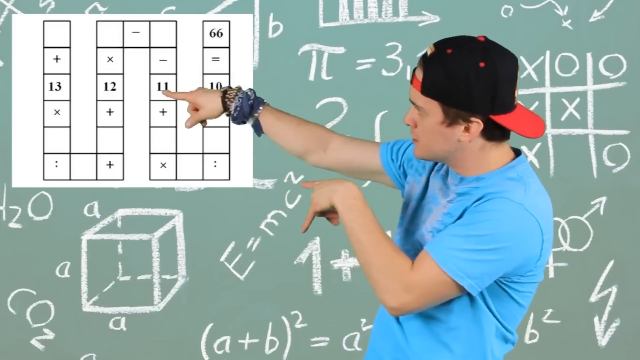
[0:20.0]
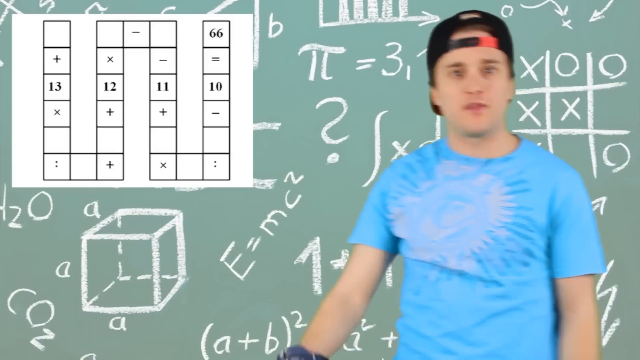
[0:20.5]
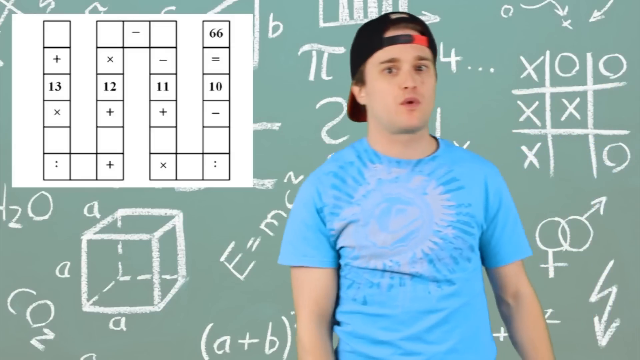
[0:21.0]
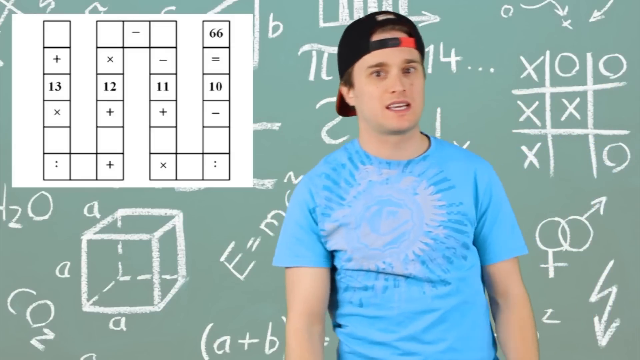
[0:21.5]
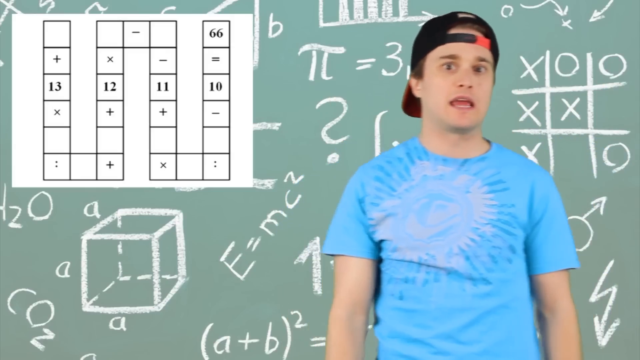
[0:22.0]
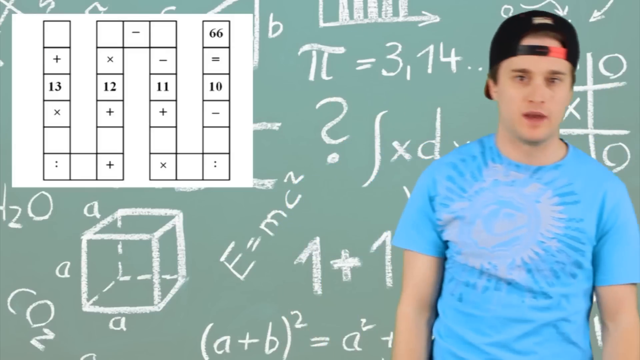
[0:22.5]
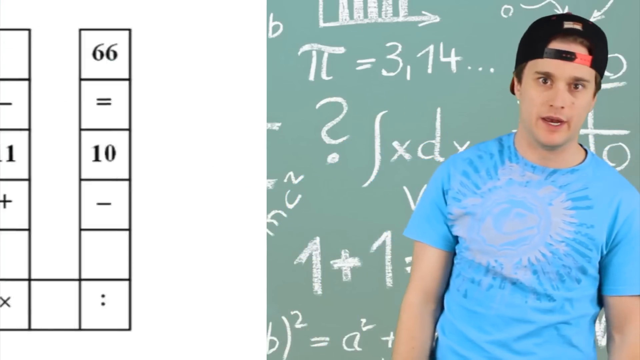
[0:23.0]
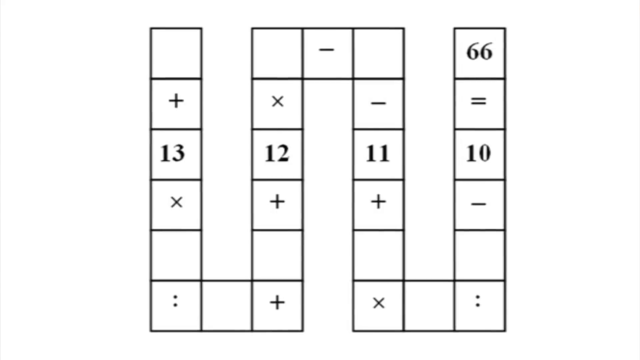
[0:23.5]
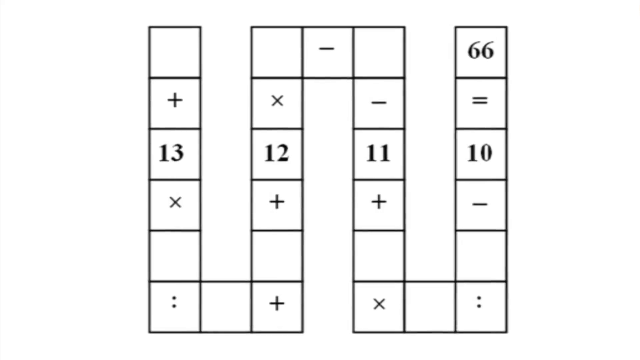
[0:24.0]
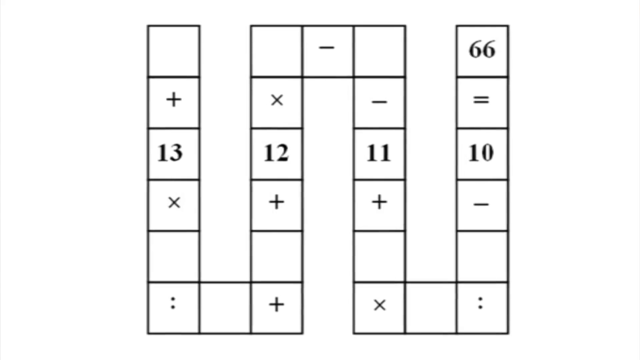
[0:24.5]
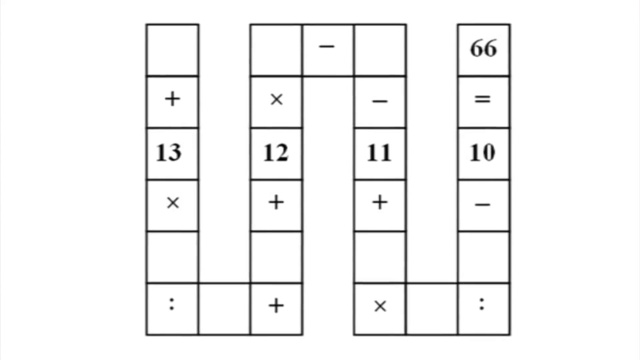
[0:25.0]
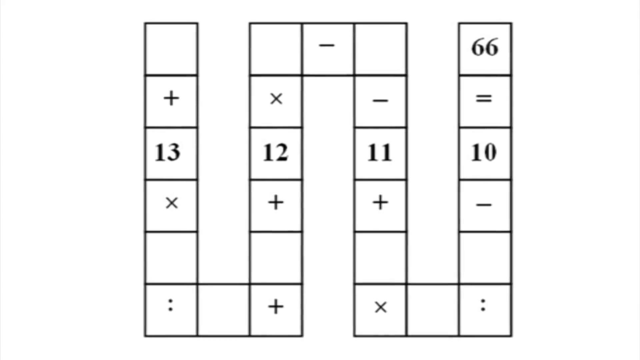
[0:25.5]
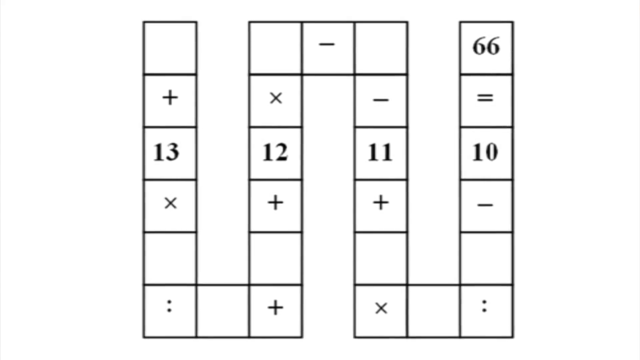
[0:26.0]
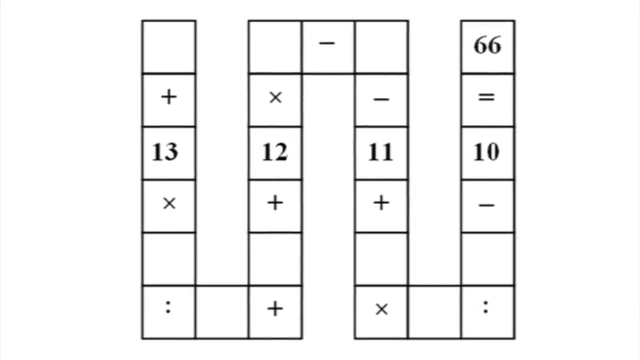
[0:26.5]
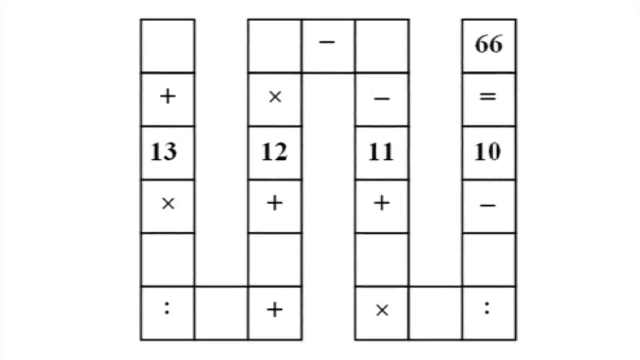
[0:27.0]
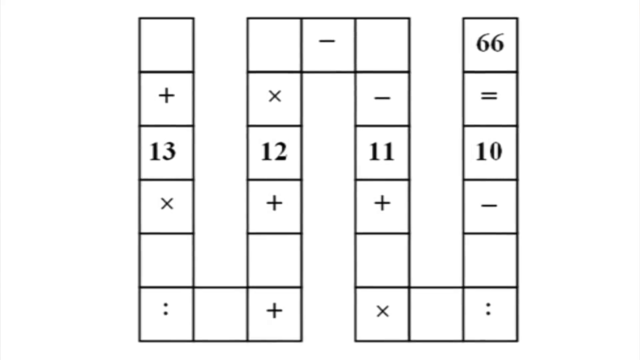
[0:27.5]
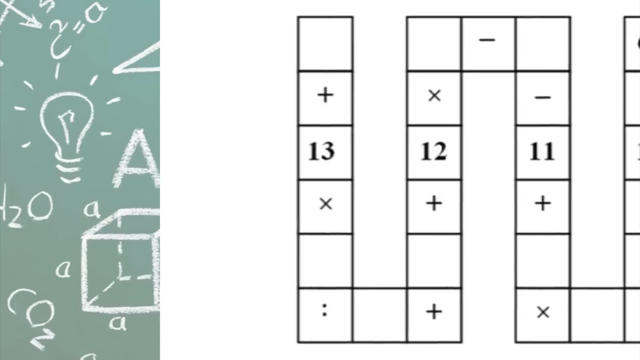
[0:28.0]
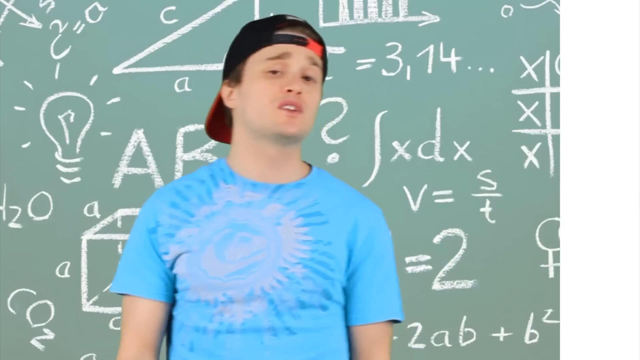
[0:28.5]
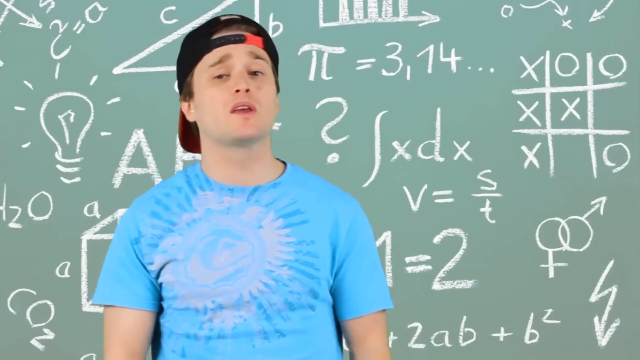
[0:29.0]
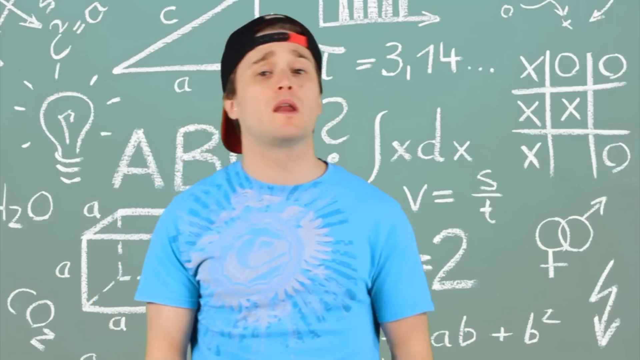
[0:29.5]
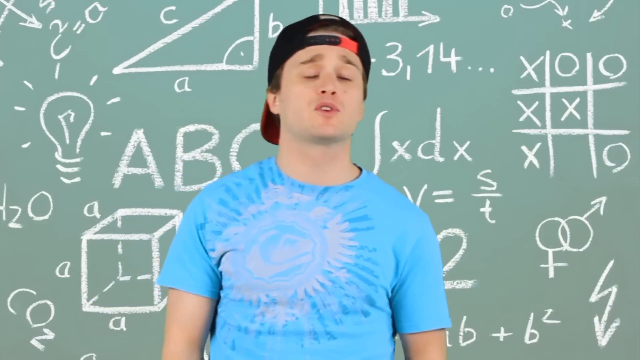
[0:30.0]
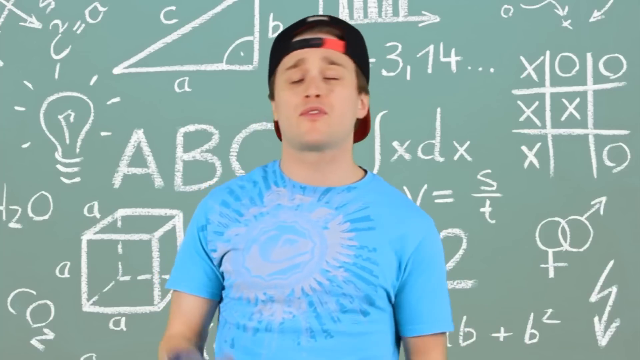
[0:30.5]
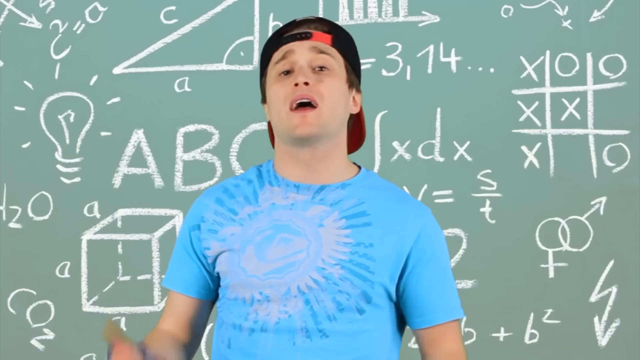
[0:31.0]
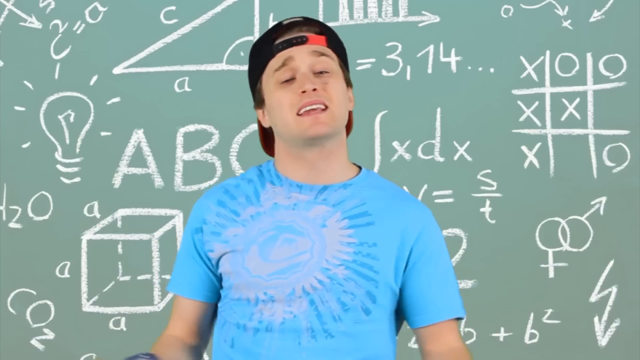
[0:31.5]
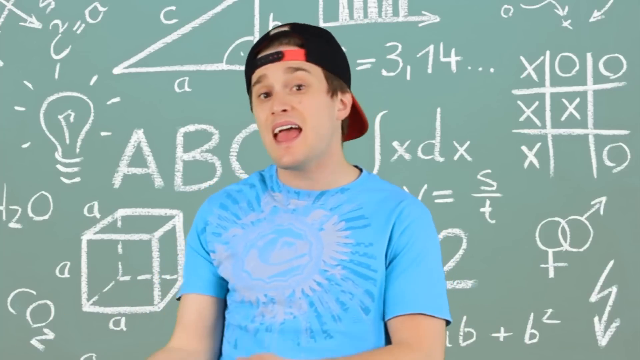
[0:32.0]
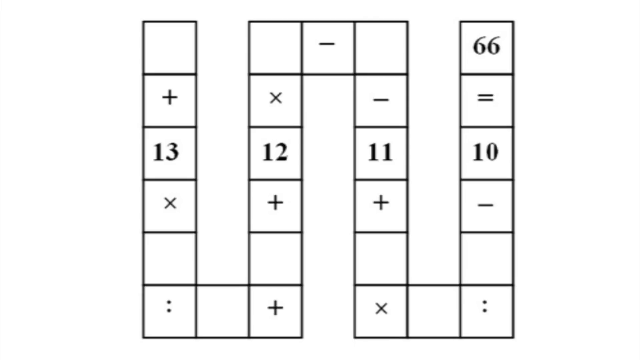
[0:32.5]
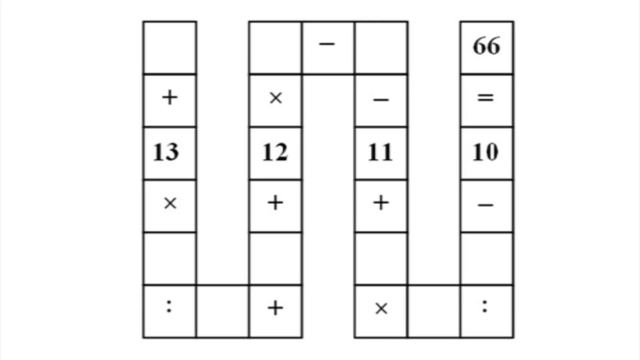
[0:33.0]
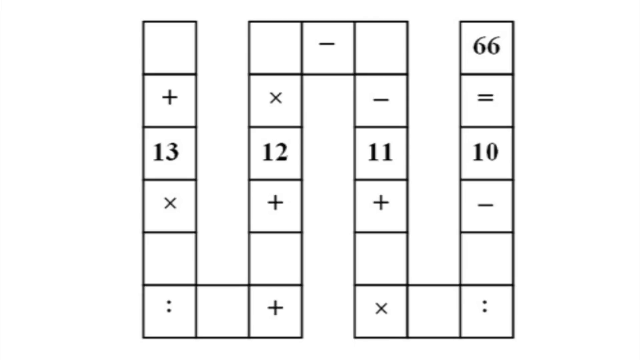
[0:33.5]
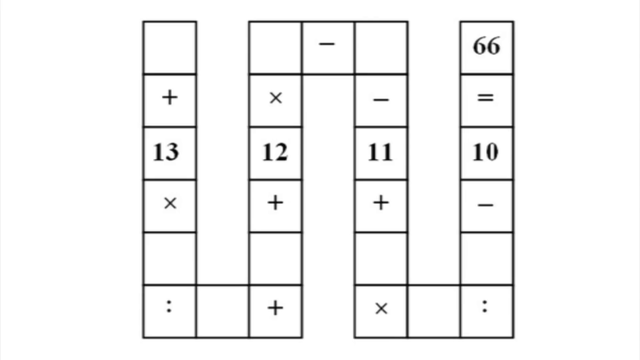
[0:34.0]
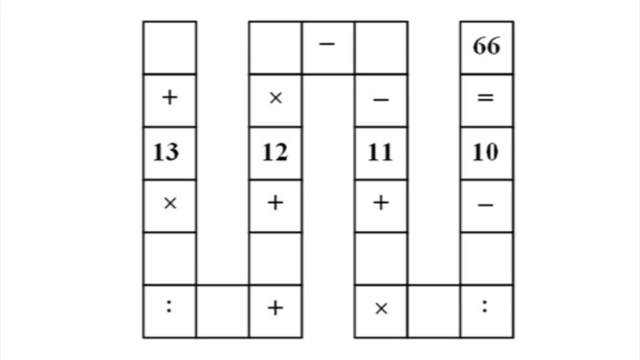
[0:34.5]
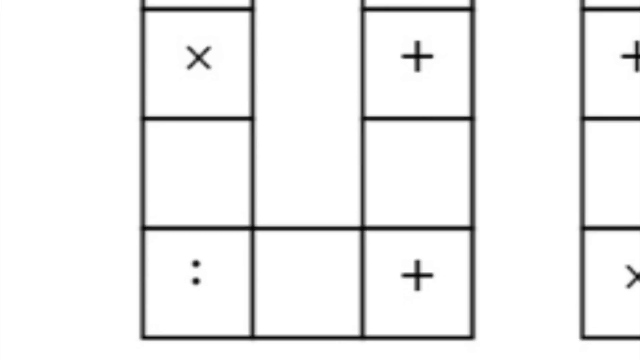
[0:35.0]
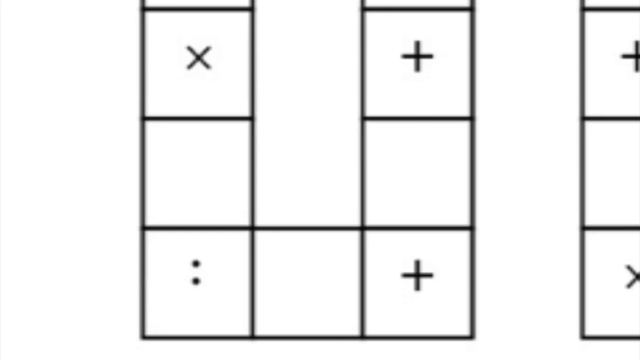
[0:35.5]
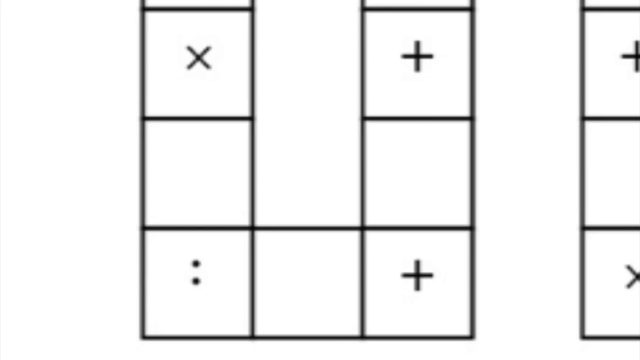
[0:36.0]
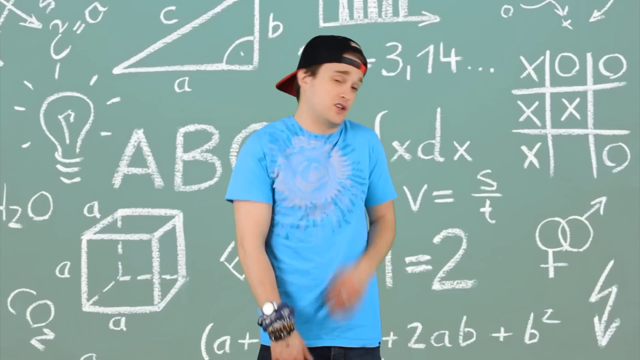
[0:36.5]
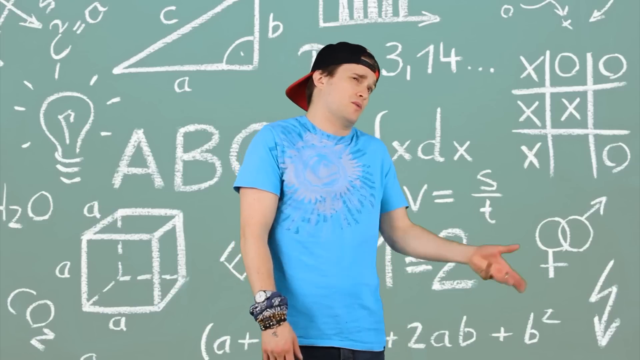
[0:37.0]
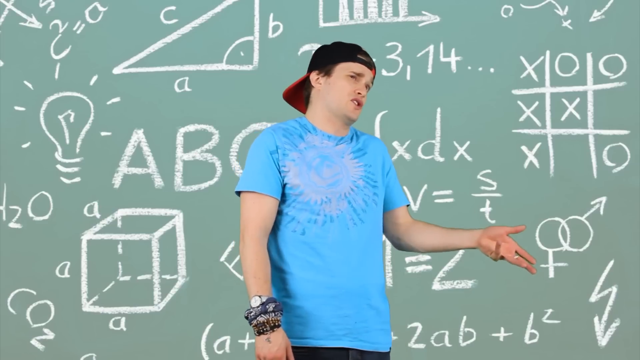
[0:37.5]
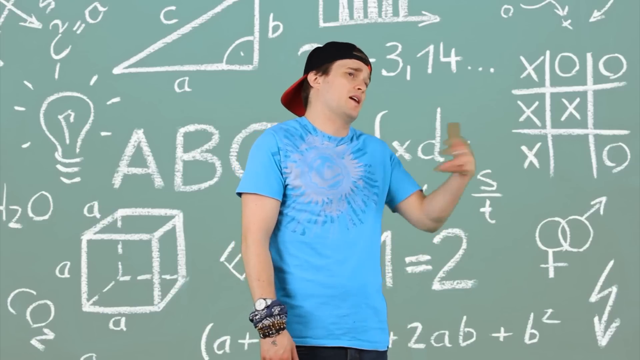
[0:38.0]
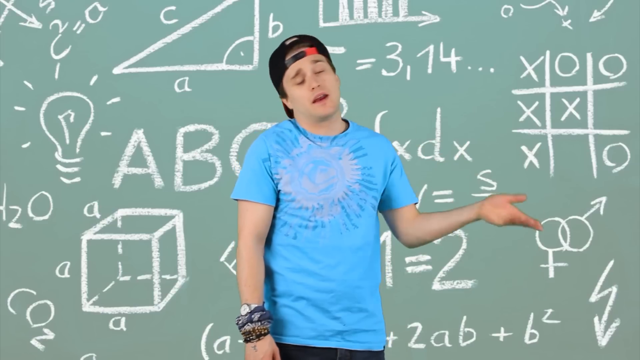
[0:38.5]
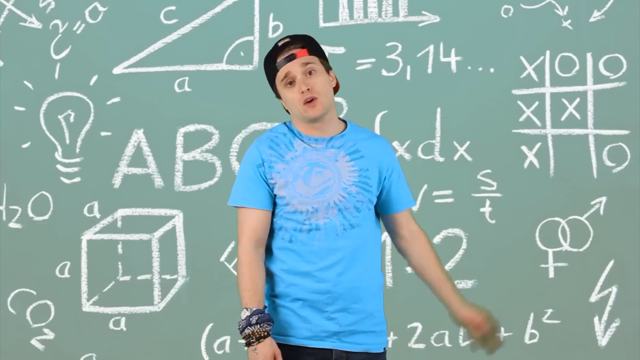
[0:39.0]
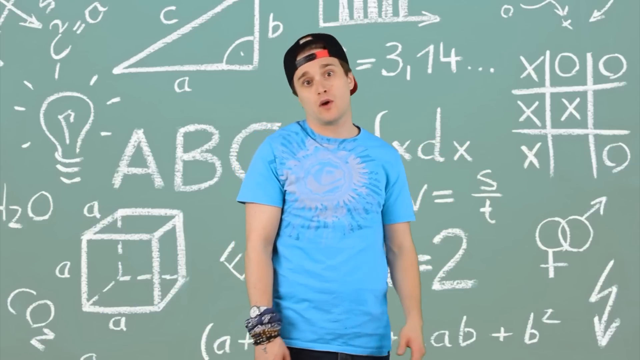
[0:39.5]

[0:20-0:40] The young man in the blue t-shirt and back-to-front baseball cap points at the screen, which shows a line of numbers including 13, 12, 11 and 10. He talks to the camera. A close-up of the numbers follows: a series of boxes forming a snake shape, with a plus sign, the number 13 and a multiplication sign, and at the end of the snake it says "equals" and then 66. The shot slowly zooms in and then zooms out again, returning to the young man in the blue t-shirt talking to the camera. The video goes back to the numbers, possibly zoomed into a section of them, and then the young man is back again, giving it some attitude.